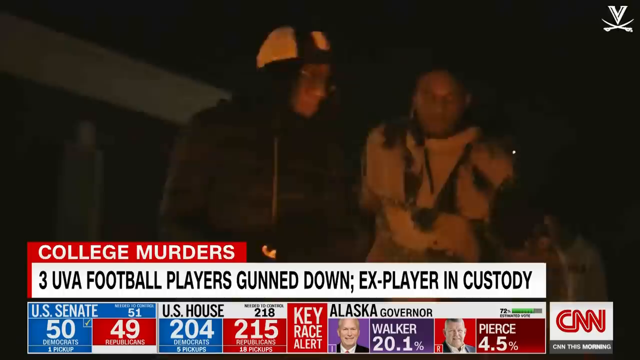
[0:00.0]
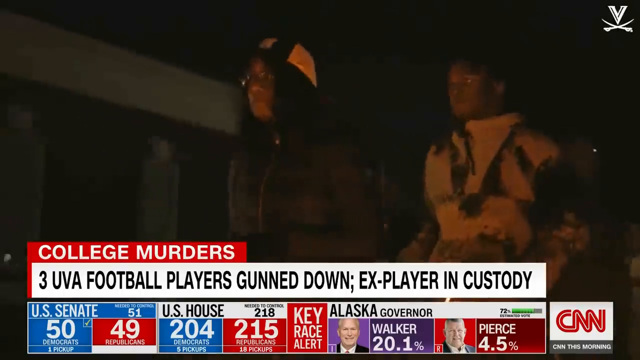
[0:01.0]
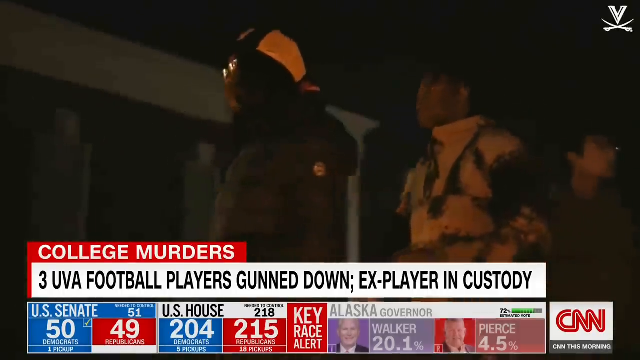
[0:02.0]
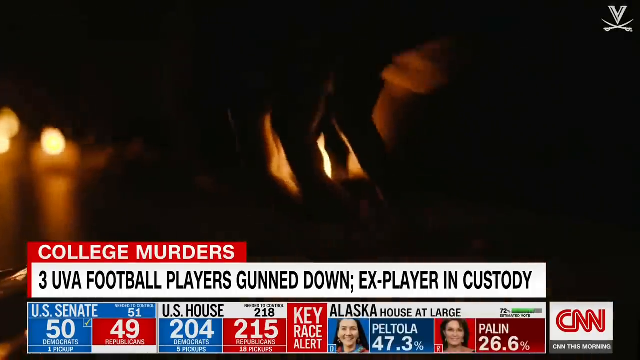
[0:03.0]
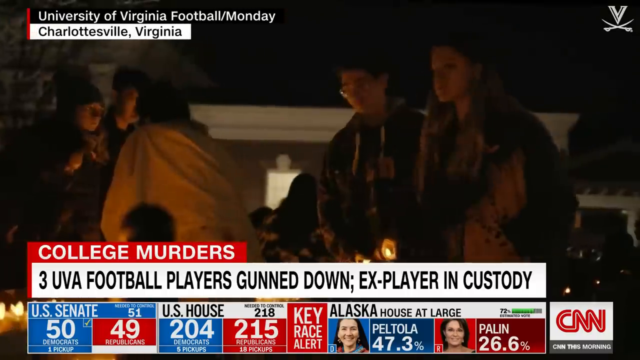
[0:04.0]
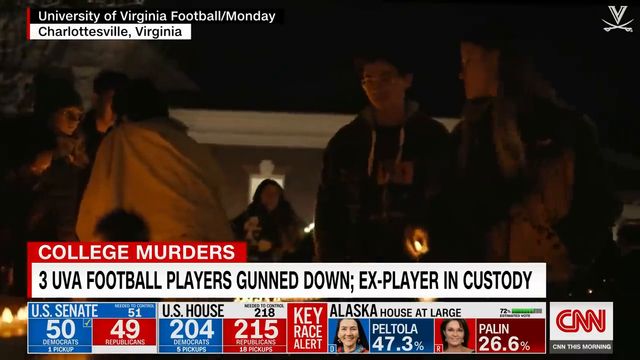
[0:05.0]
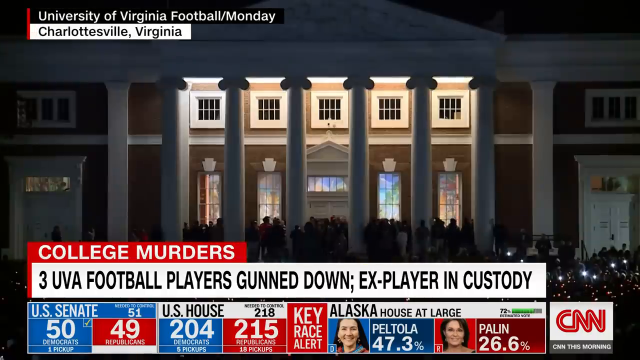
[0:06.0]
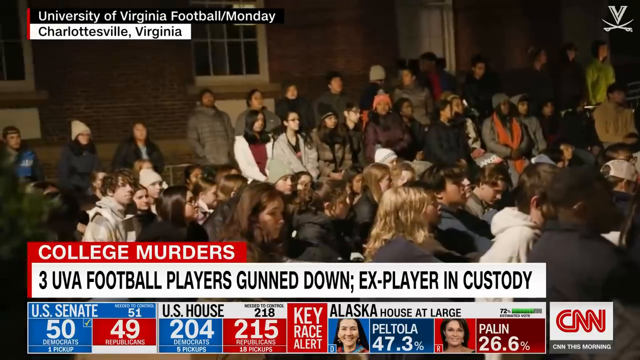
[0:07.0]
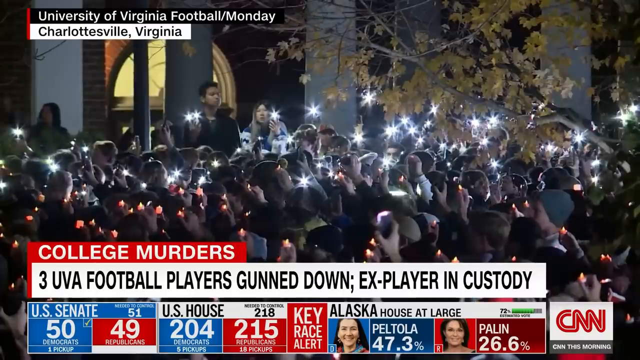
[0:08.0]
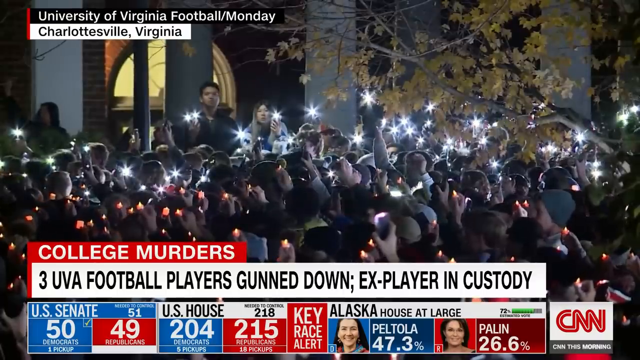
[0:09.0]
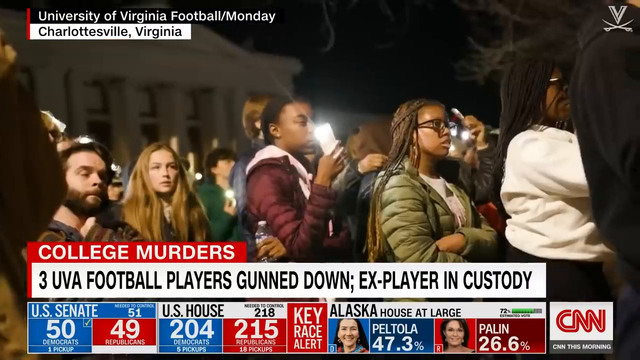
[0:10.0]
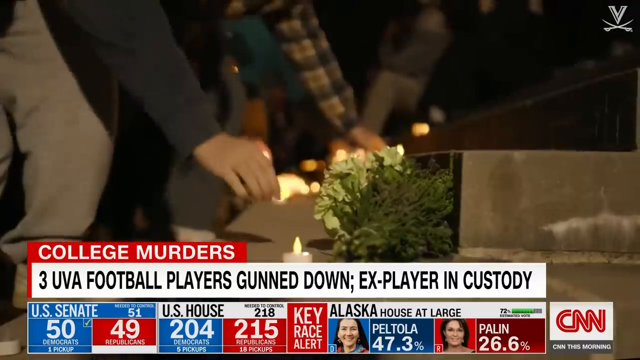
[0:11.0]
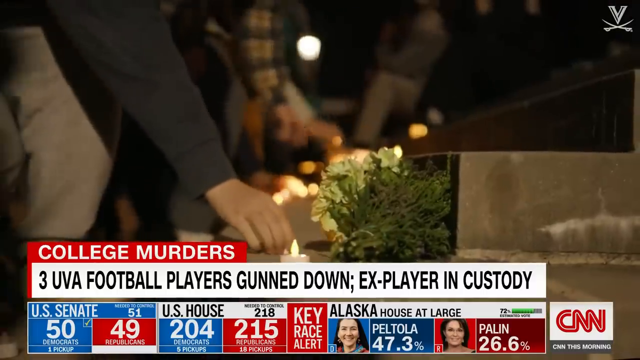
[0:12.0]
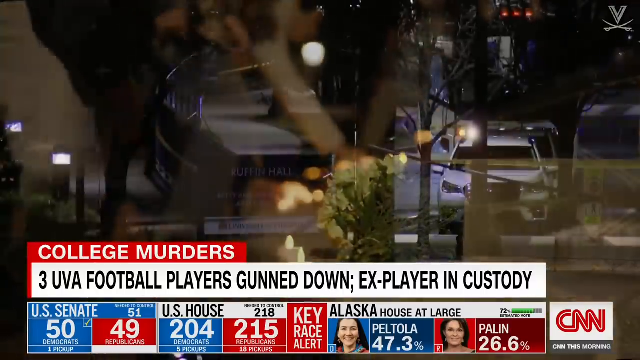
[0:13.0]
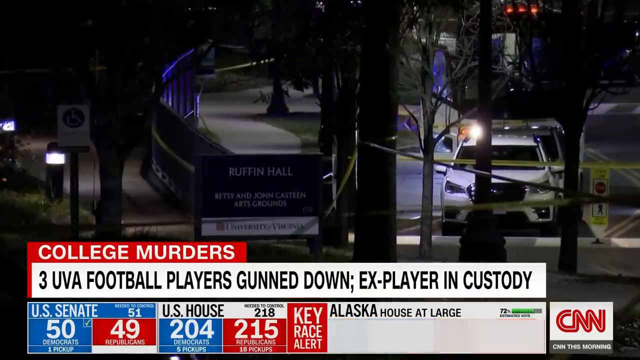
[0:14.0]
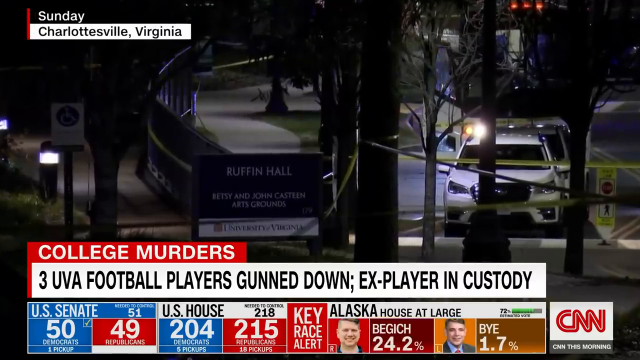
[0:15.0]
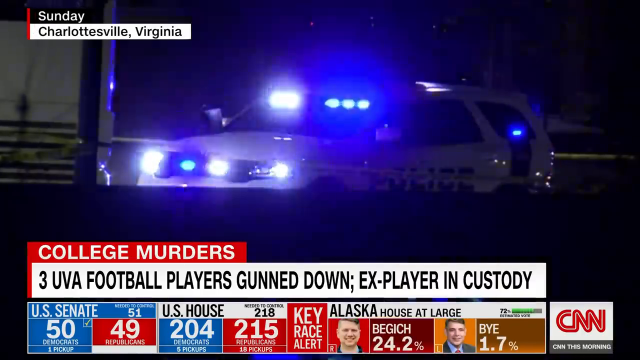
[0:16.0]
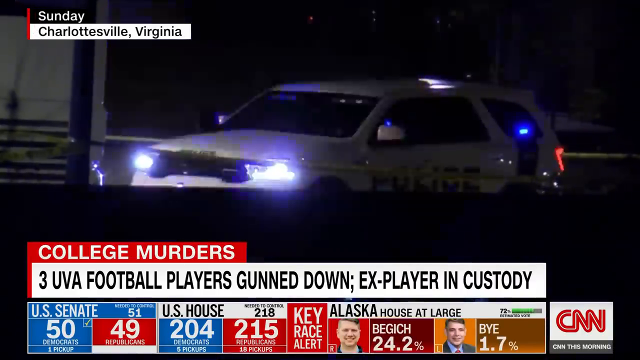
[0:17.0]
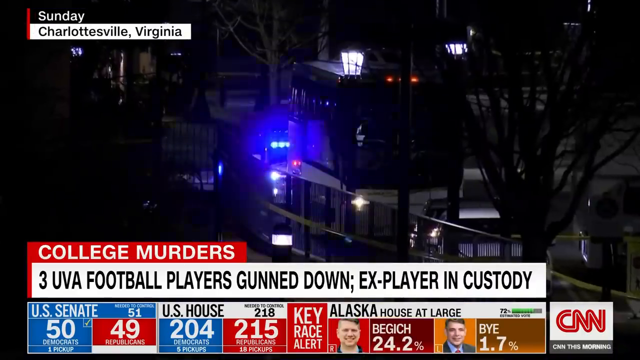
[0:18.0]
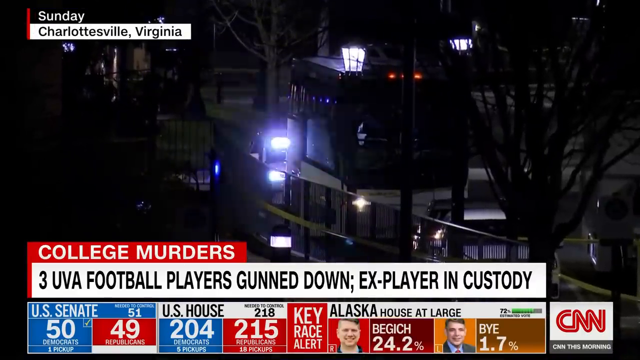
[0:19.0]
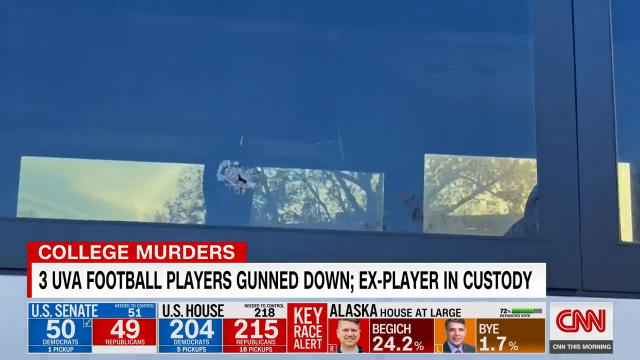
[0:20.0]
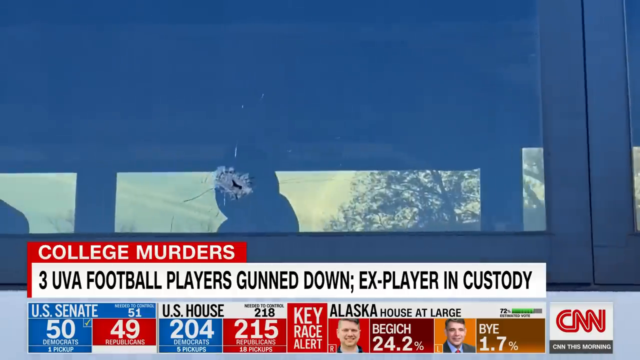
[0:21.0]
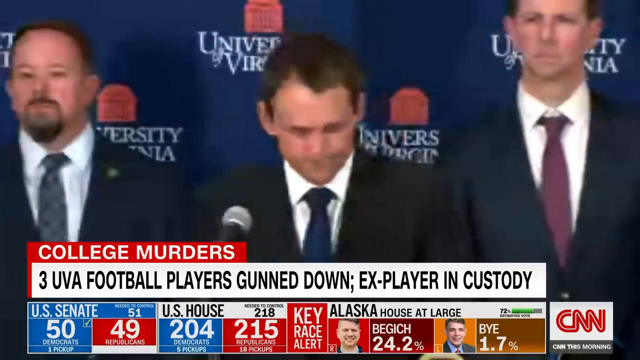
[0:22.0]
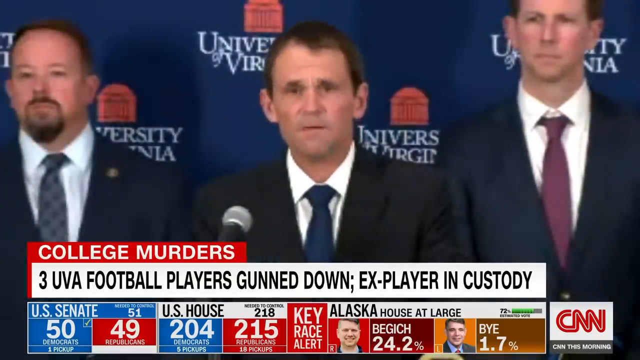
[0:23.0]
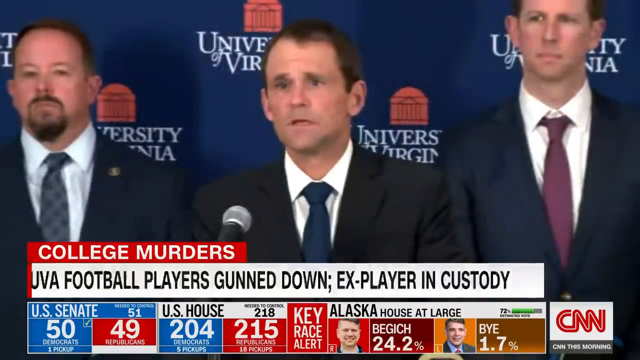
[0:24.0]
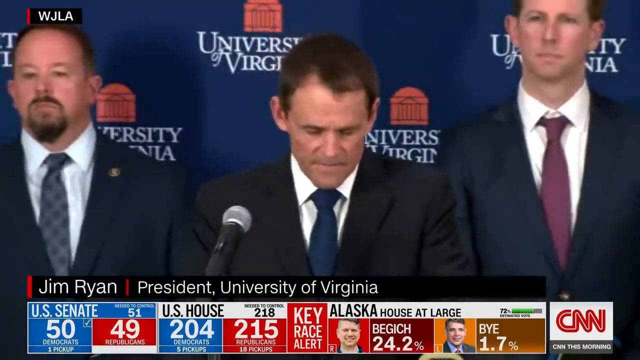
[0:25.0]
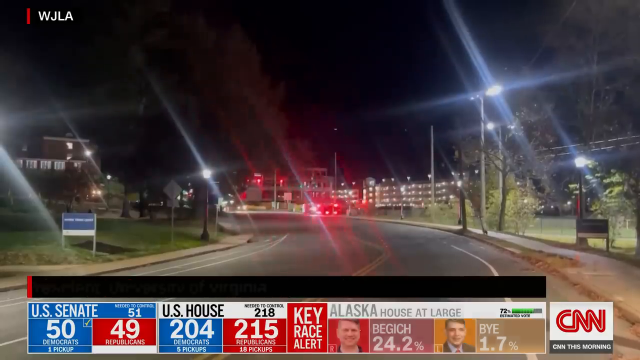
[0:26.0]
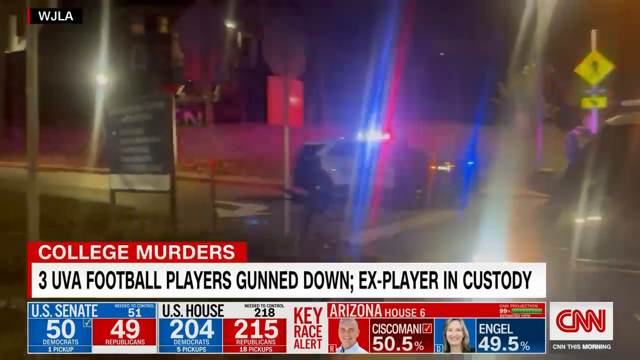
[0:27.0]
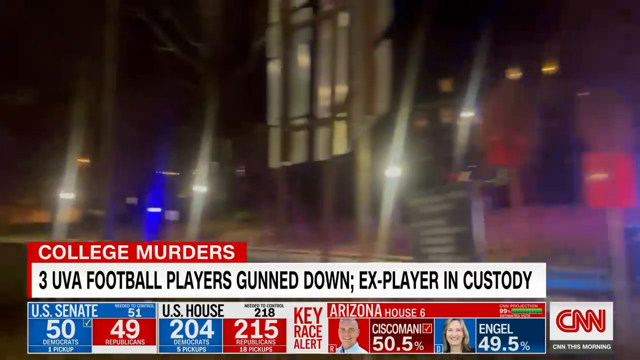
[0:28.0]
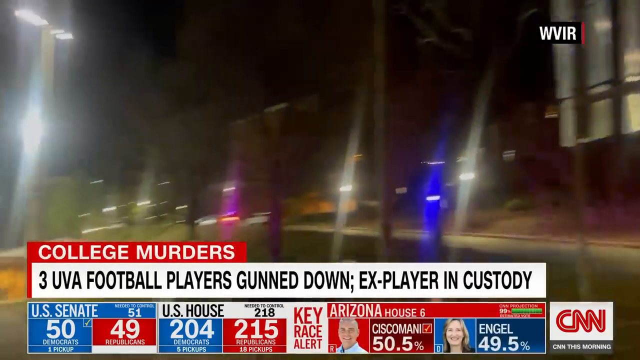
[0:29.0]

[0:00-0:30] News footage covers the story of college murders at the University of Virginia football program in Charlottesville, Virginia. A large banner at the bottom of the screen reads "Three UVA football players gunned down, ex-player in custody." On screen is a nighttime vigil outside a historic building with large archways, where people hold up their phones like candles to pay tribute to those who lost their lives. Many of them are young African American people. Other footage captures the area outside a student dormitory known as Ruffin Hall. A blue sign on a big placard on the college campus says "University of Virginia" at the bottom, and yellow police tape is tied around trees and lampposts to cordon off the area where the shooting occurred. At the very bottom of the screen, election results show the U.S. House at 204 for the Democrats in blue and 215 for the Republicans in red.